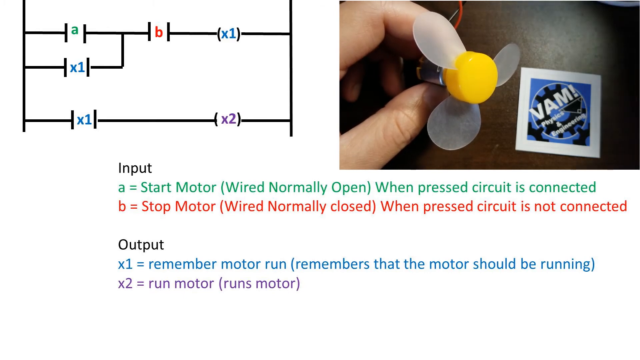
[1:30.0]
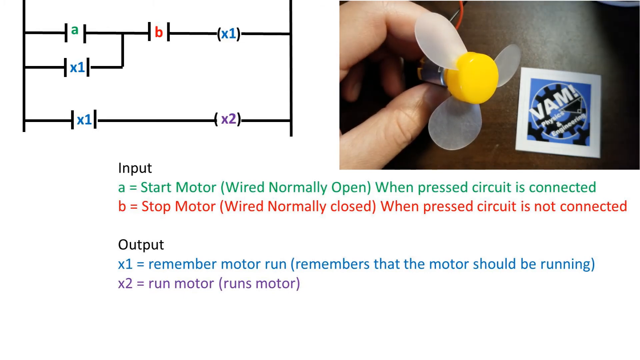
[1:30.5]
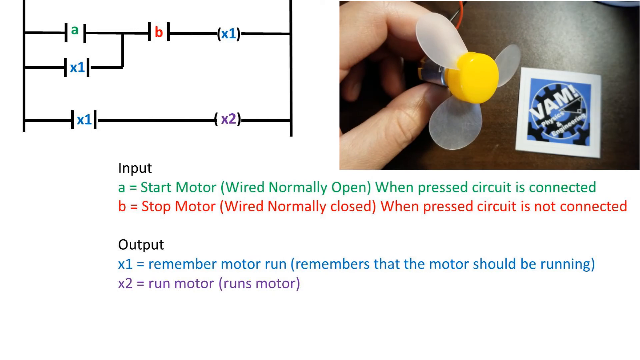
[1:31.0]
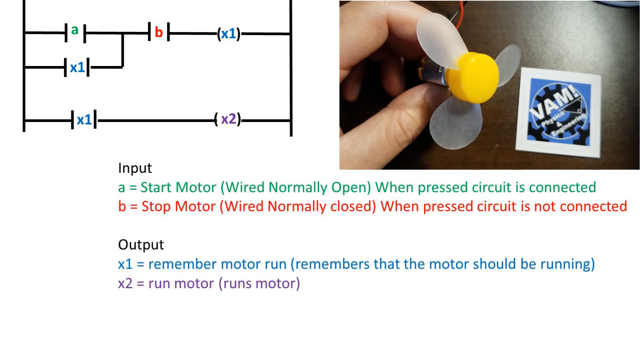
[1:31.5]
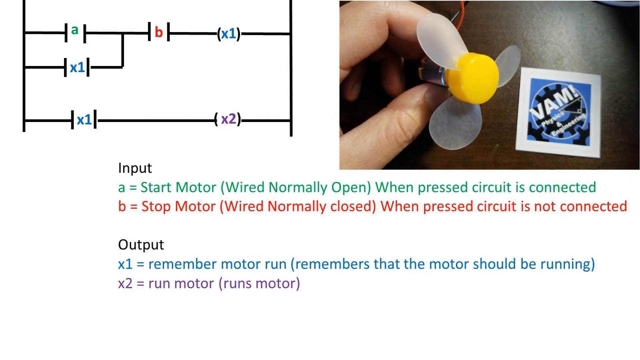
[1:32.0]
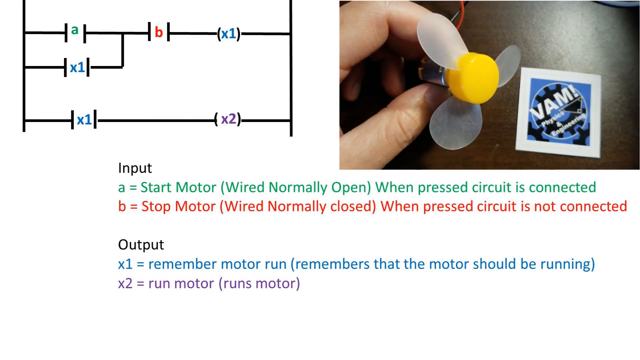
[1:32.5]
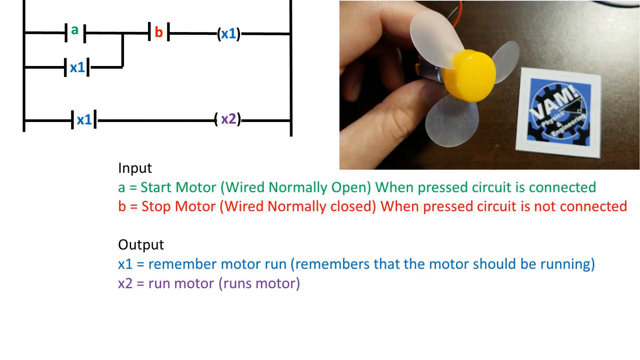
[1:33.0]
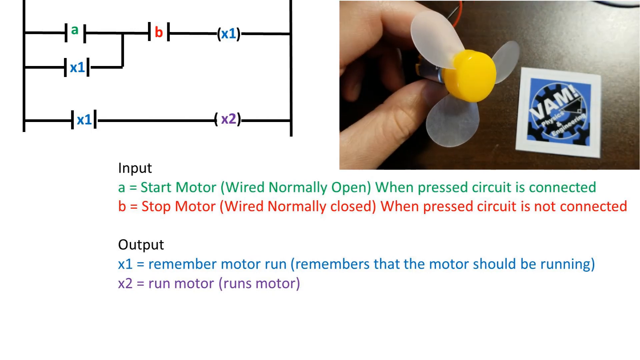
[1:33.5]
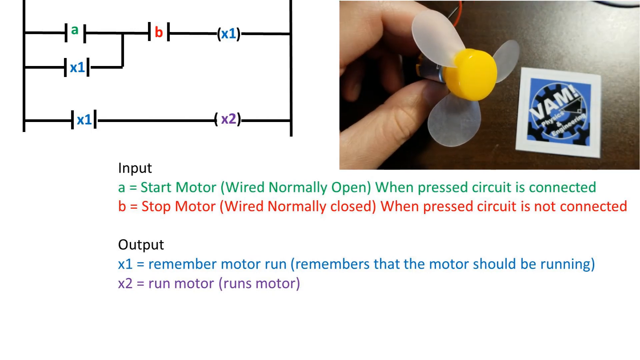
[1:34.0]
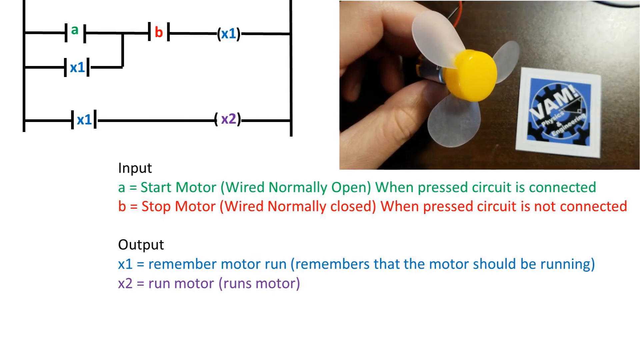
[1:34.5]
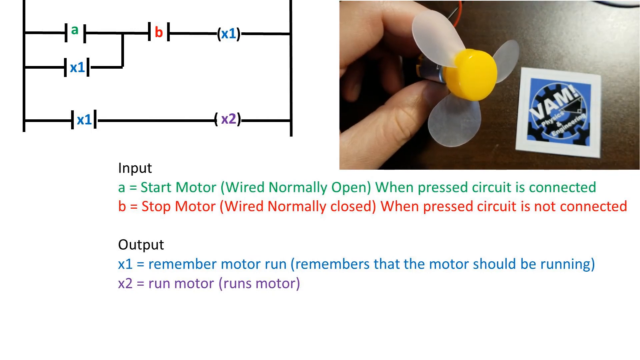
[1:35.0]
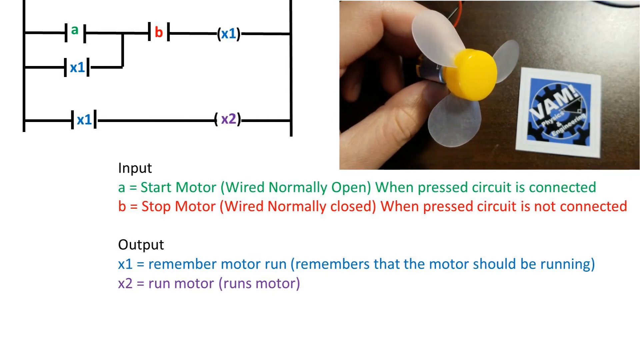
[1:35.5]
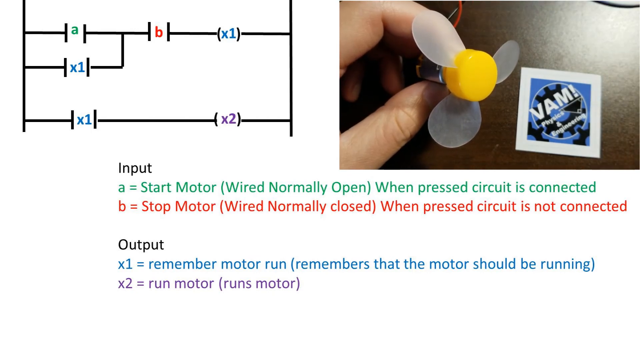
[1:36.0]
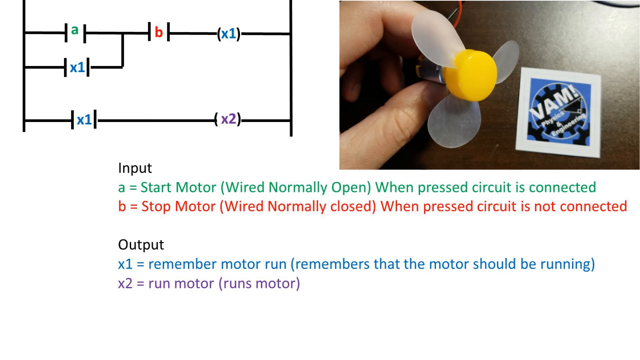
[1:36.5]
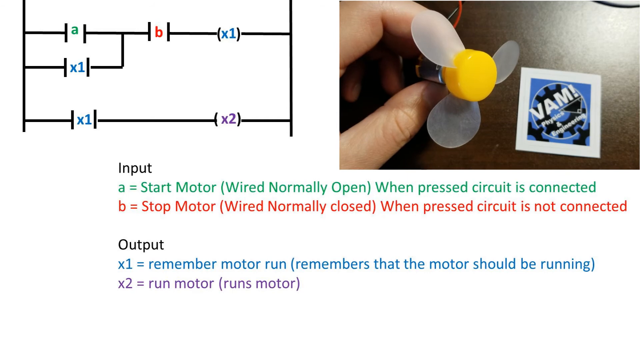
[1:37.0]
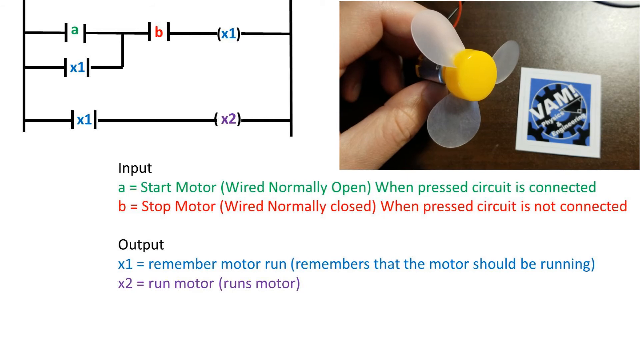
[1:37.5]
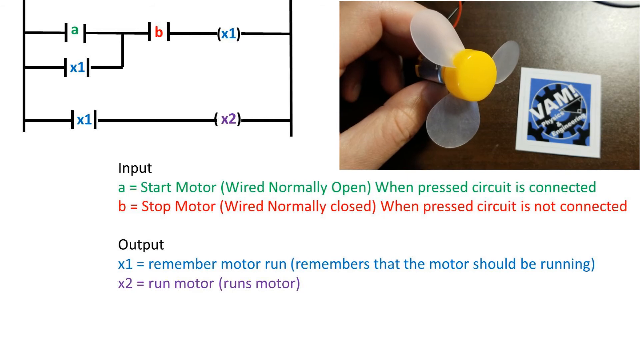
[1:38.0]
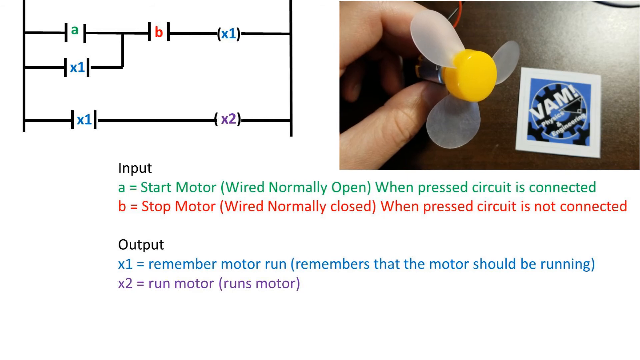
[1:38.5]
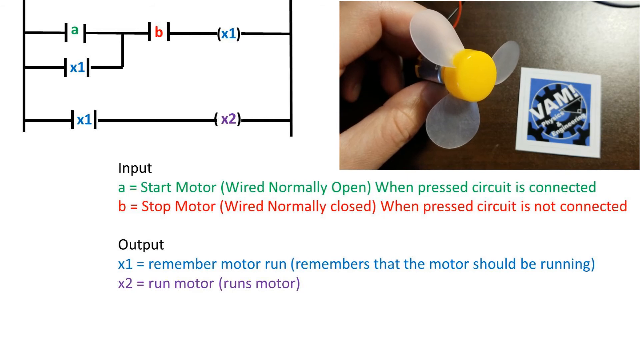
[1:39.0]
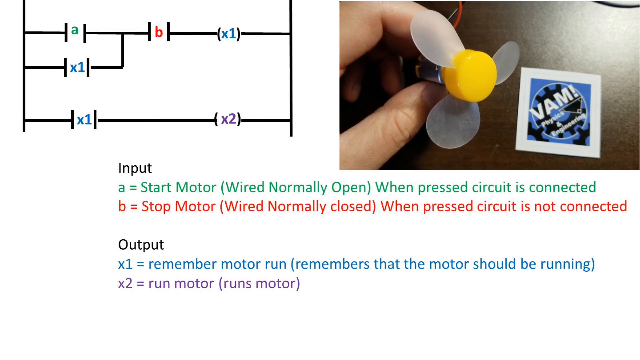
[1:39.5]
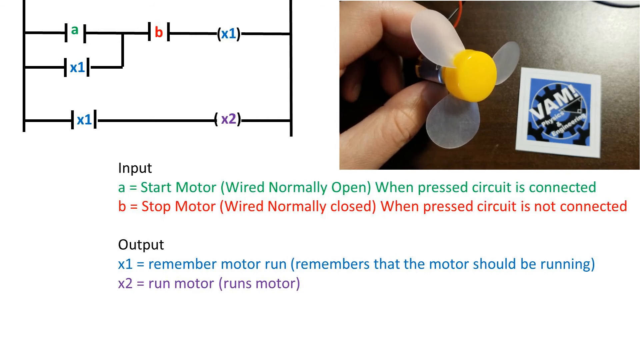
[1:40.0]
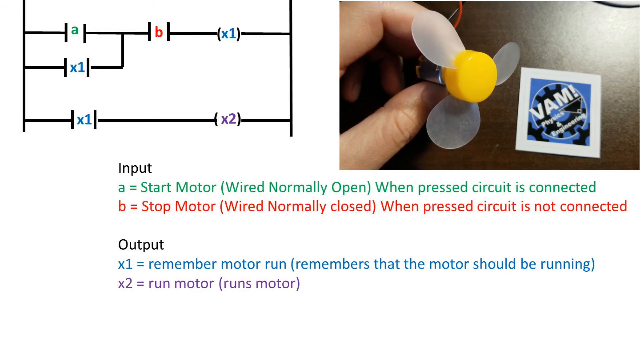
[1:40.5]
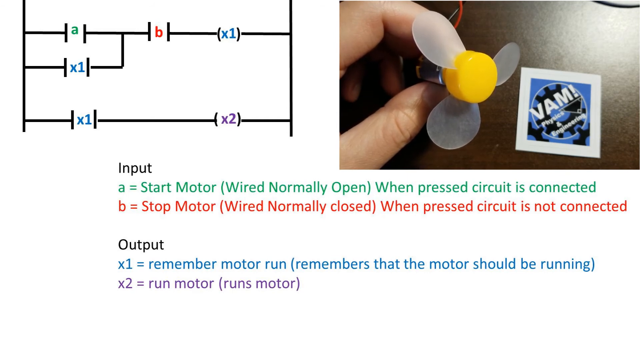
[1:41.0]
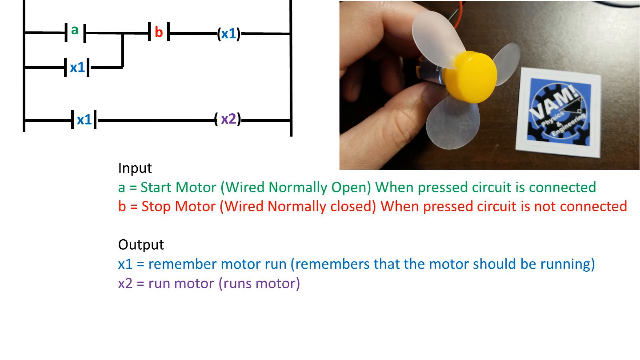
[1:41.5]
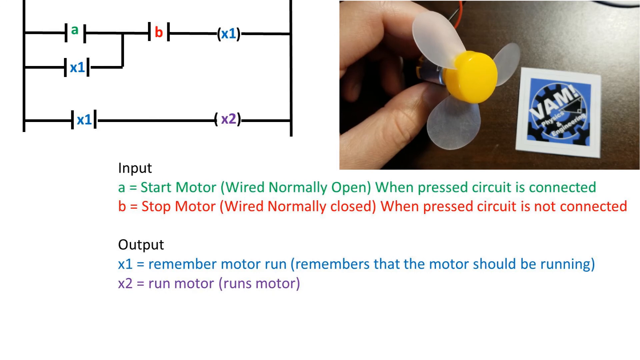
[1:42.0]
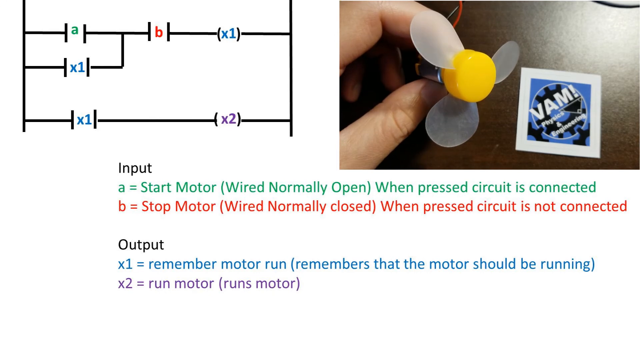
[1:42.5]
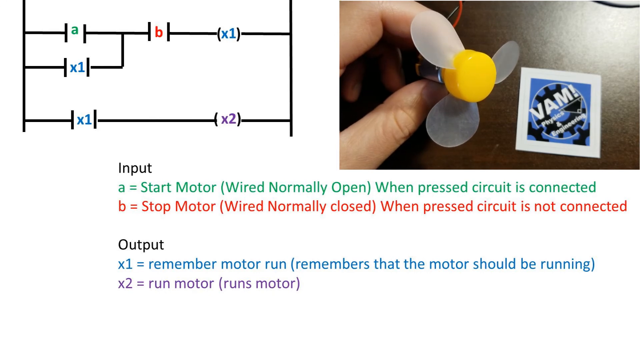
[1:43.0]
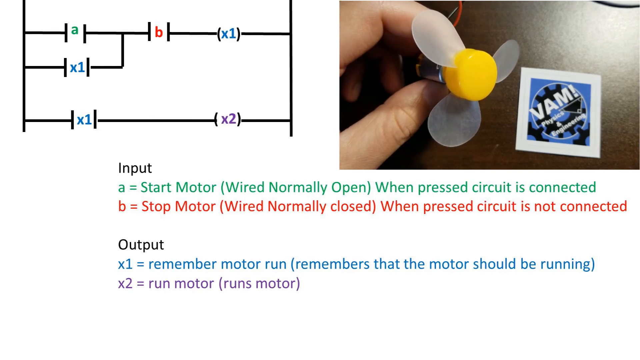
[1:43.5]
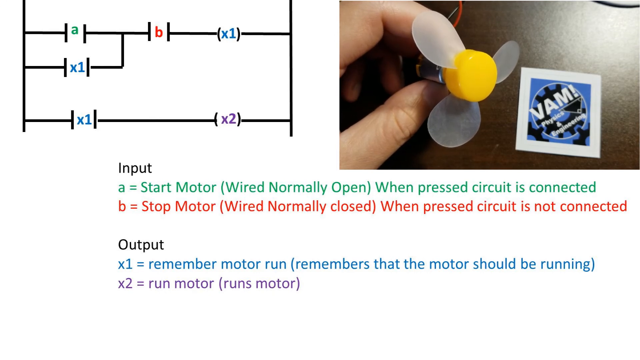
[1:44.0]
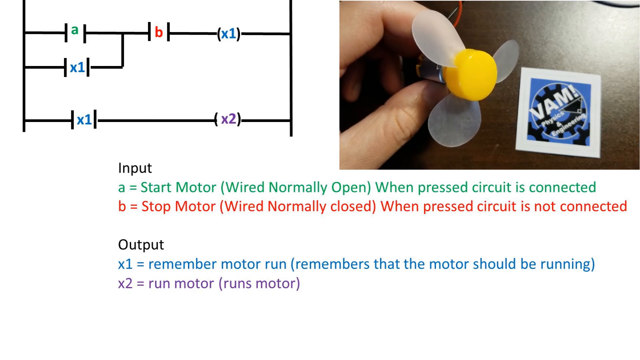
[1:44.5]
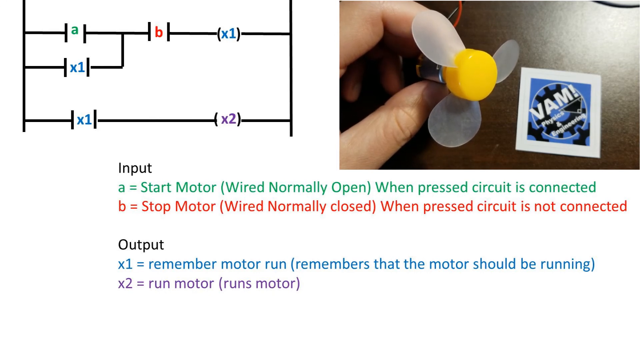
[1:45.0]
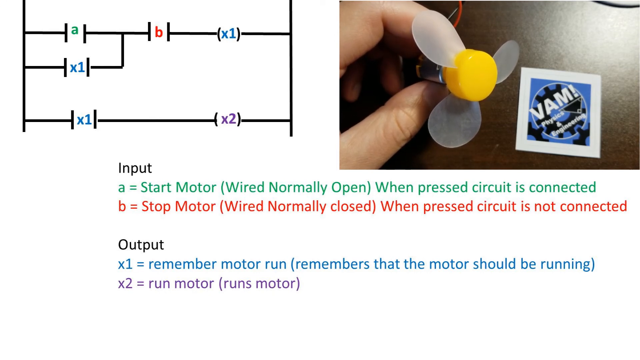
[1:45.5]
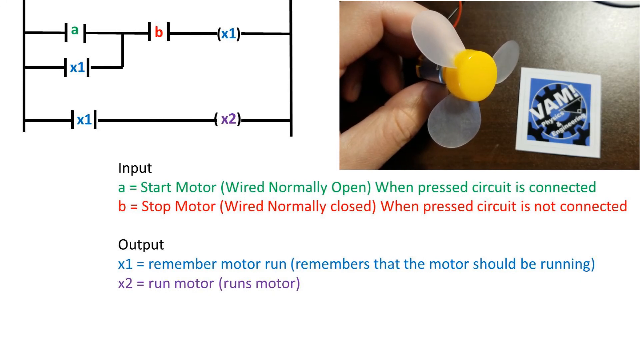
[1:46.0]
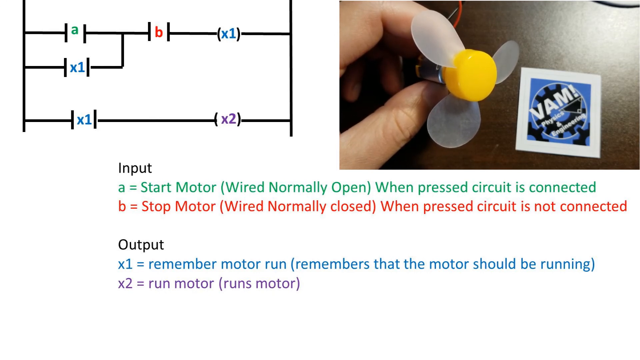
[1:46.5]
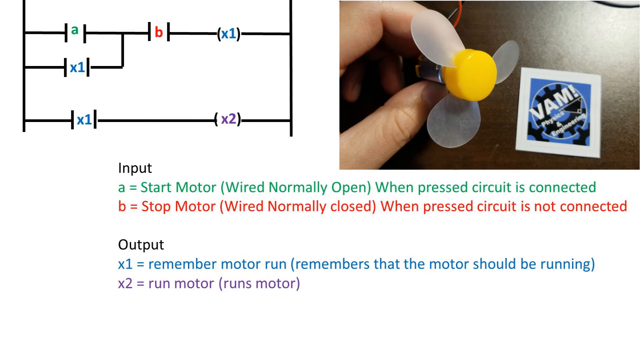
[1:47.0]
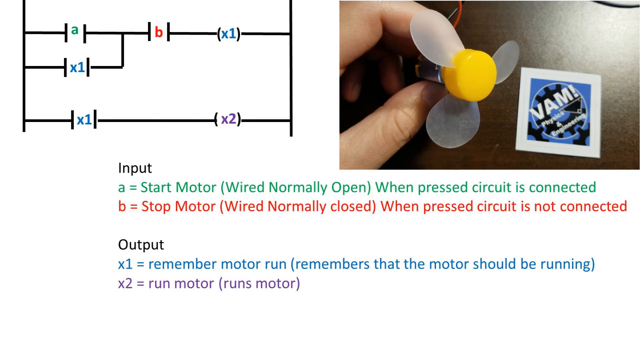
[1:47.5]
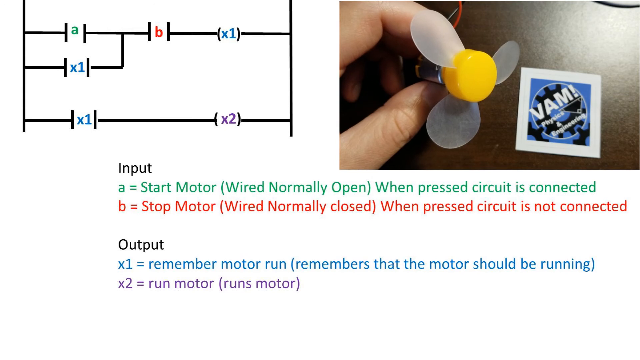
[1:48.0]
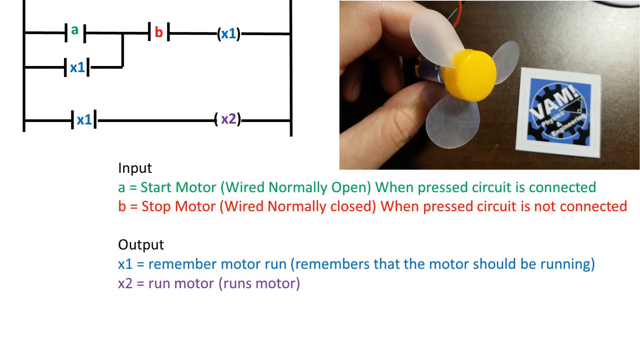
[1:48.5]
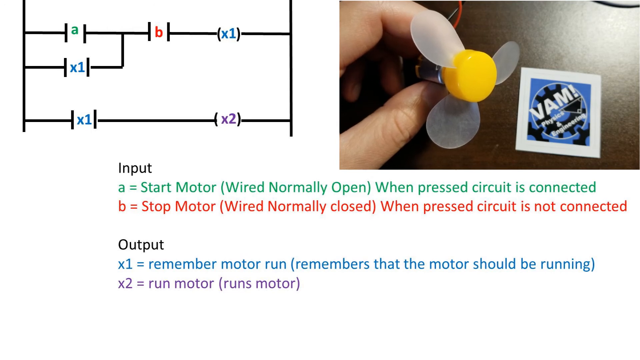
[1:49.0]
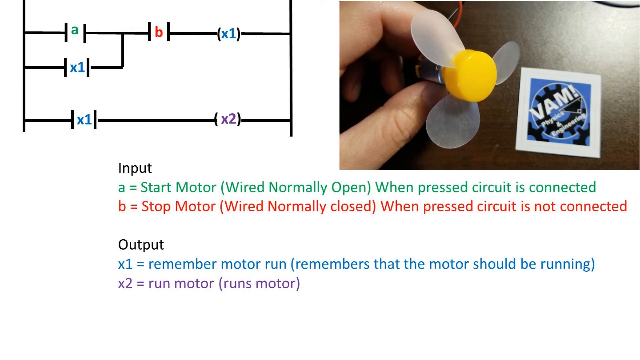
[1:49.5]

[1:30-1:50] The title "intro to mechatronics part two, series circuits" appears; the people involved are apparently electricians running an experiment. A page reads "intro to mechatronics one ladder, logic to logic gates", with arrows and step-by-step instructions for the logic to logic gates. On the other side, blue color is used, with three tables of instructions. Next comes a page with more instructions: instruction A reads "start motor" in green, and instruction B reads "stop motor" in red. Then a hand holds the flower-like object used in the experiment, with two electricity cords, a red one and a black one, at the back of it.